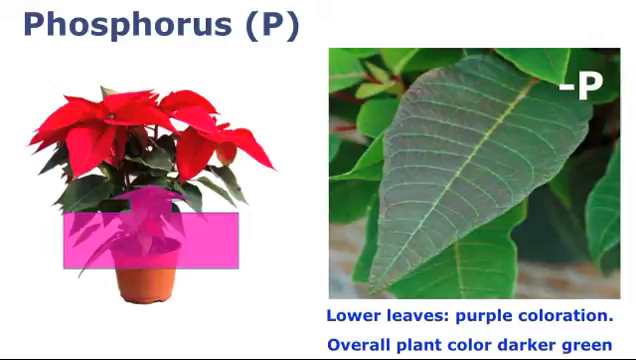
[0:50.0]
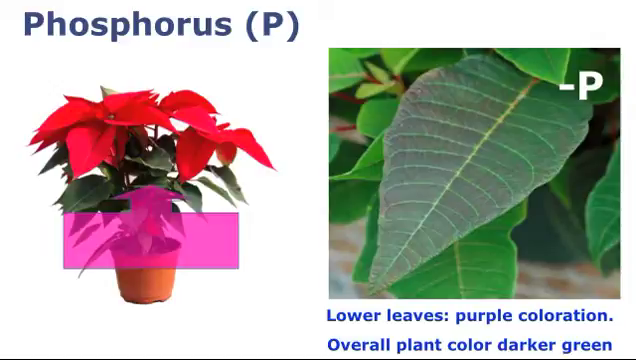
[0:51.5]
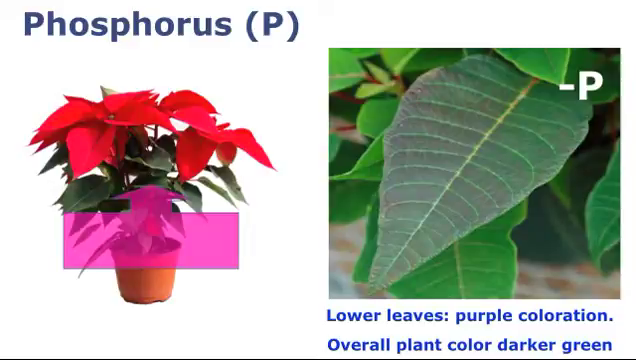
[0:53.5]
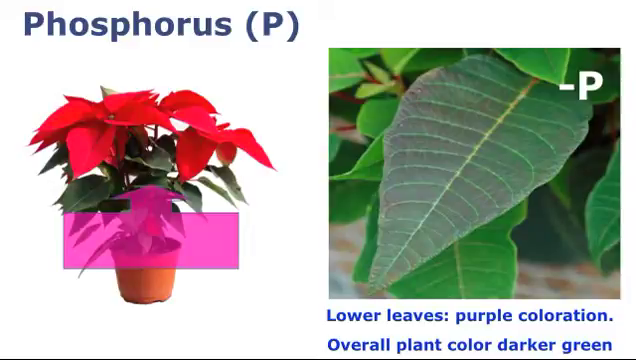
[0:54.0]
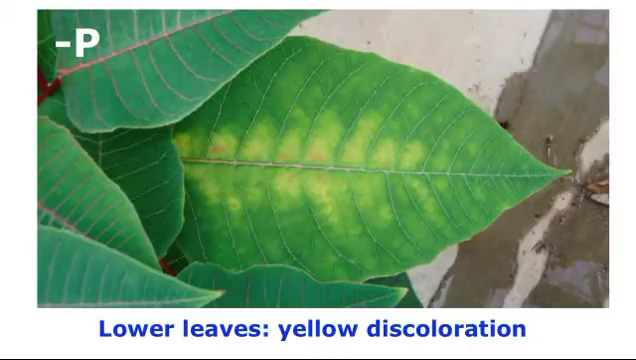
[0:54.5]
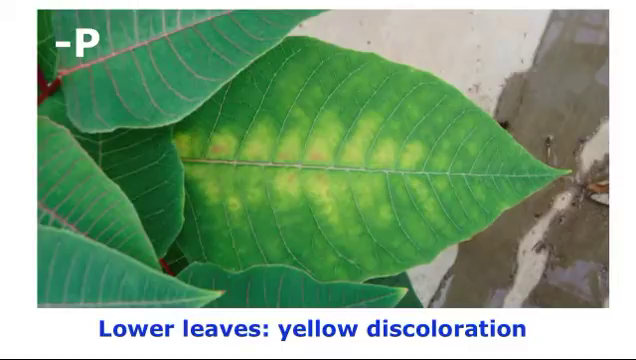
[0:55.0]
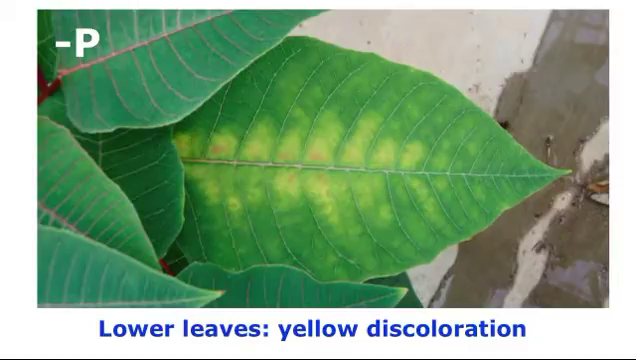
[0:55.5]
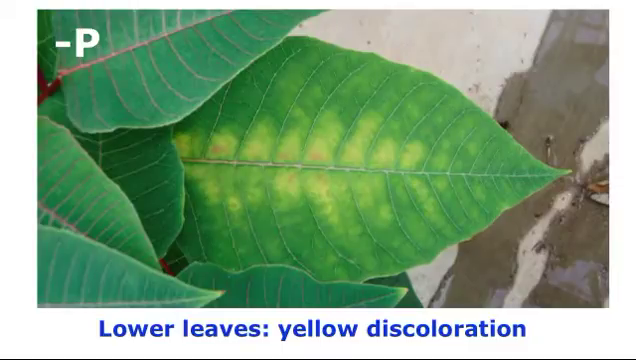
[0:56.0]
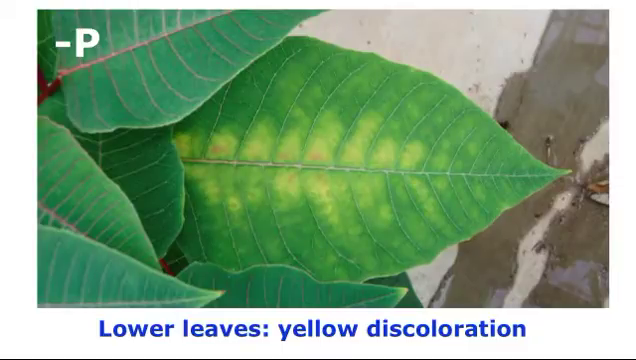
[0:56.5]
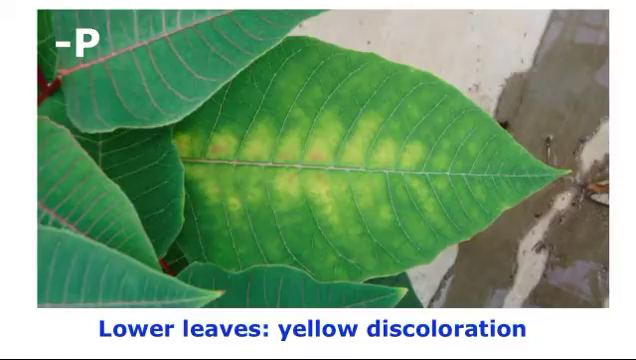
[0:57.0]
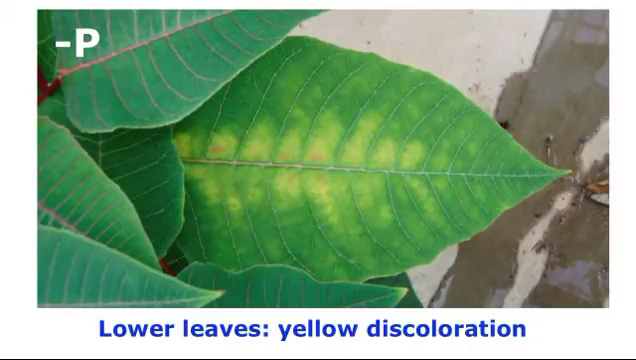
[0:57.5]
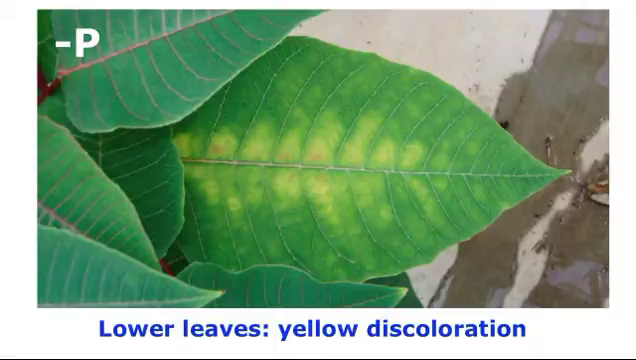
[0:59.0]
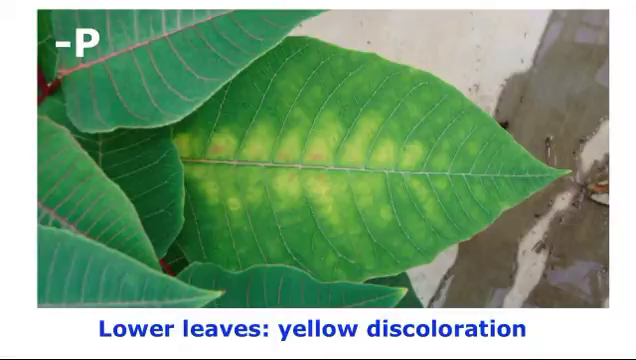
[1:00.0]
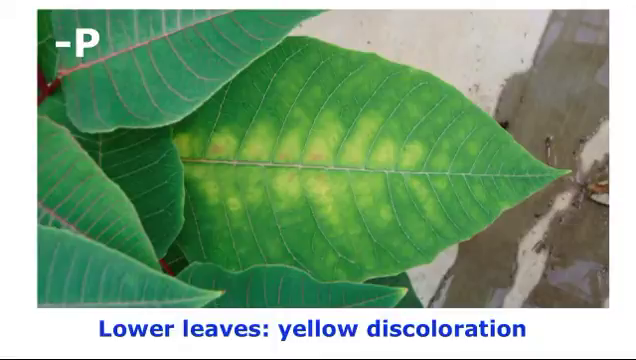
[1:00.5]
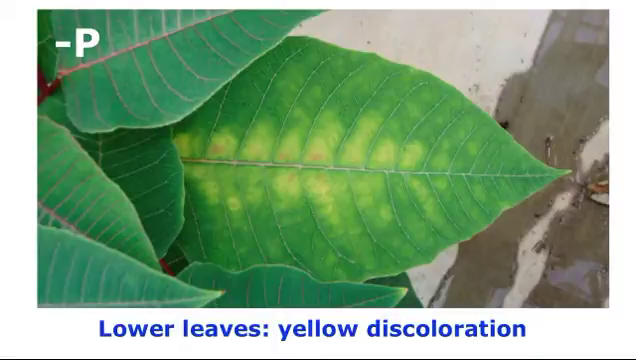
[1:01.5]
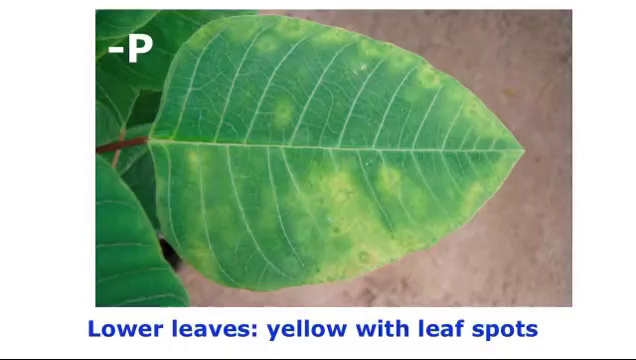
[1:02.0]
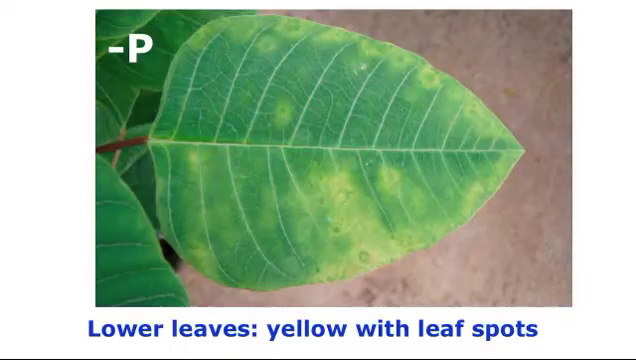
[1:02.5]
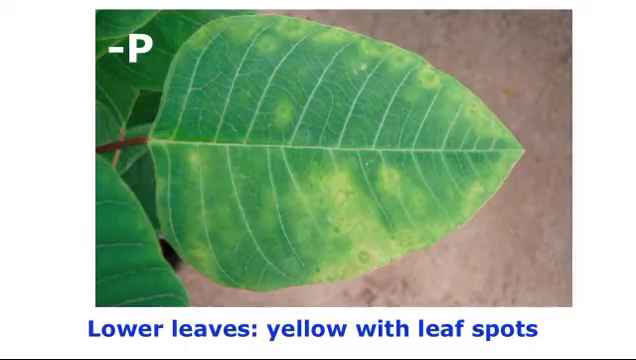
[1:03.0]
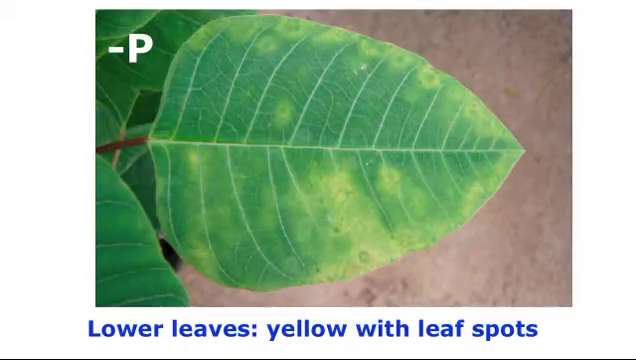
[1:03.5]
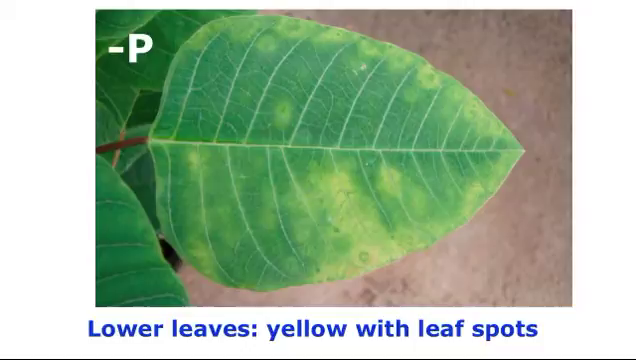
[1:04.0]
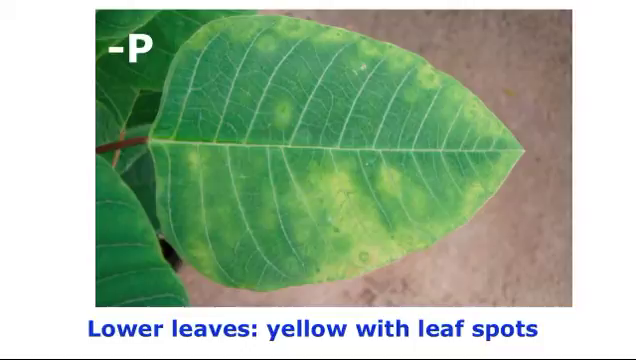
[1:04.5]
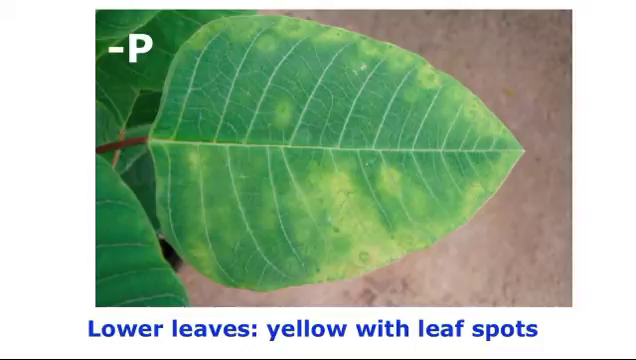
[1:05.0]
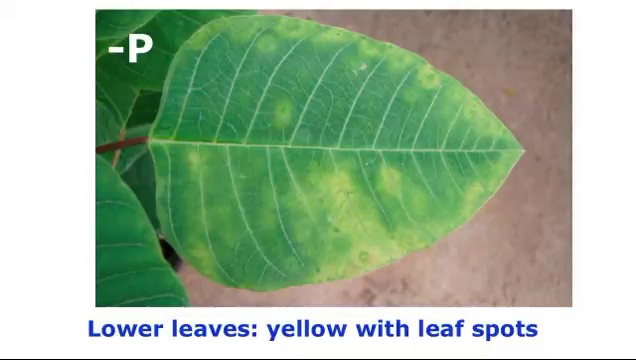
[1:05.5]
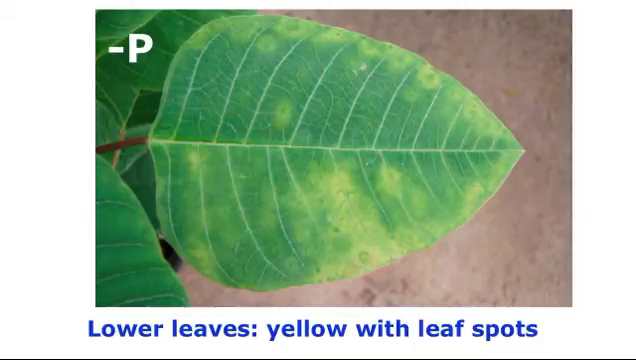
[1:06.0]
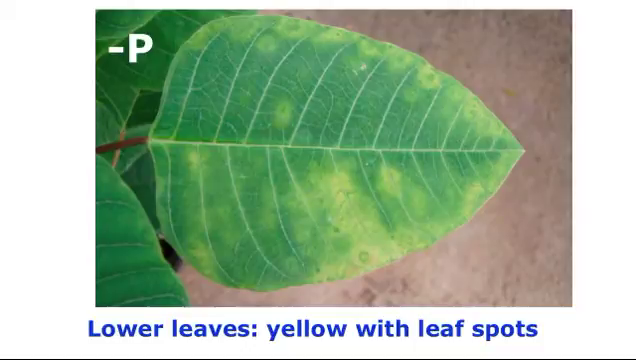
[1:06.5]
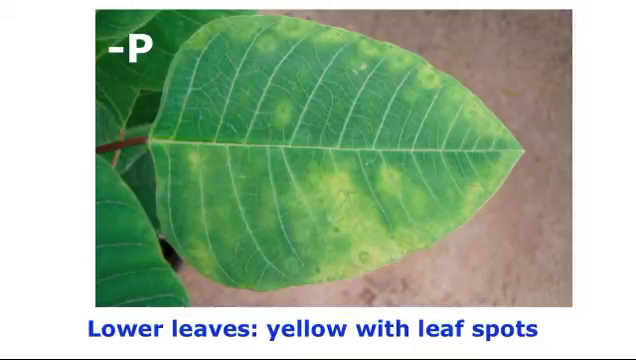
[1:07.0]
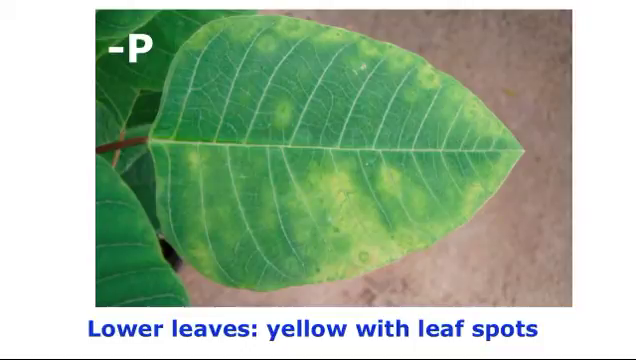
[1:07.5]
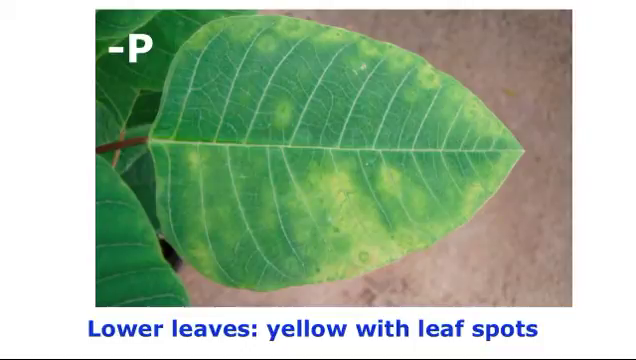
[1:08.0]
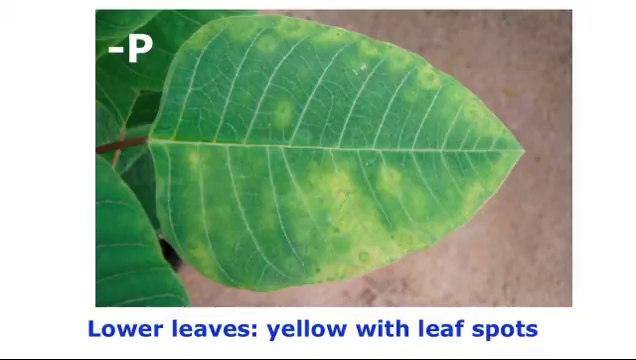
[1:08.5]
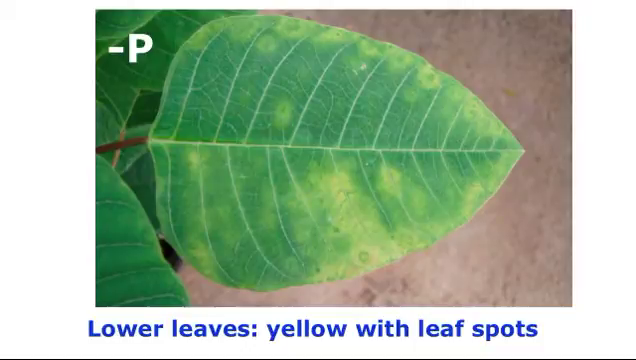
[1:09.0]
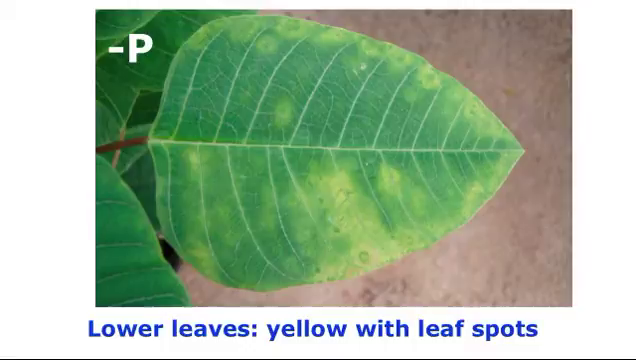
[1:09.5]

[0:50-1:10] On a white background with several picture illustrations, blue lettering at the top left reads "phosphorus (P)." On the left side is an illustration of a potted set of poinsettias, with a pink box with an upward-pointing arrow above the potted part of the plant in the bottom center. On the right is a picture of a green leaf with a white "-P" icon in its top right portion. Beneath the leaf picture, on the bottom right of the screen, blue lettering reads "lower leaves purple coloration overall plant color darker green." The scene transitions to a picture of leaves over a concrete floor, with "-P" in white text in the top left. Below the picture, blue text reads "lower leaves, yellow discoloration." In the center of a large leaf, yellow discolorations run throughout the center along the base stem of the leaf. The scene then transitions to a picture of another leaf, with "-P" in white text in the top left corner and blue text beneath reading "lower leaves yellow with leaf spots." Unlike the previous picture, the yellow discoloration on this leaf is on the bottom portion of the leaf rather than along the stem.